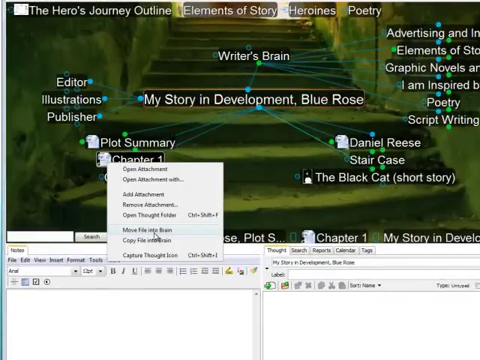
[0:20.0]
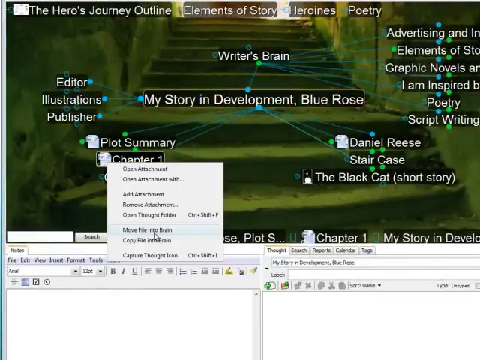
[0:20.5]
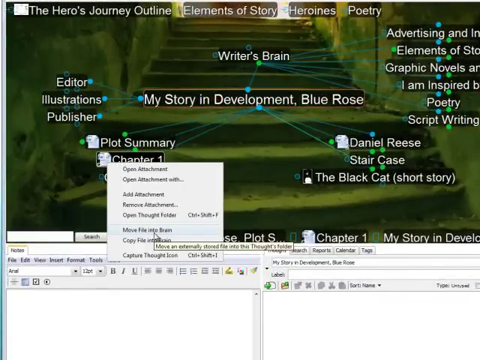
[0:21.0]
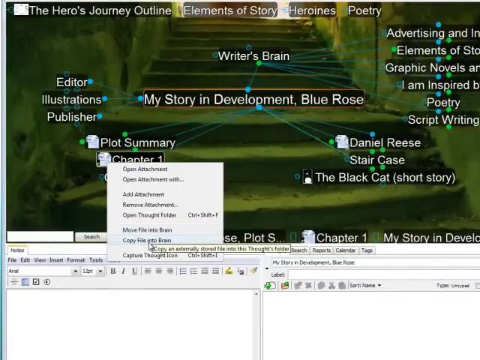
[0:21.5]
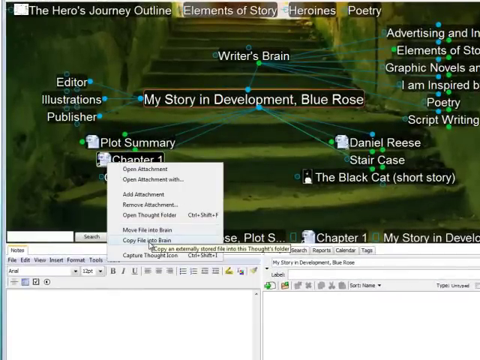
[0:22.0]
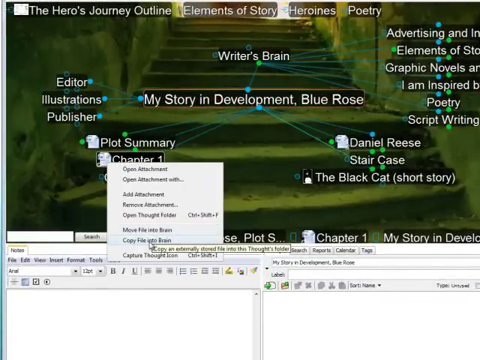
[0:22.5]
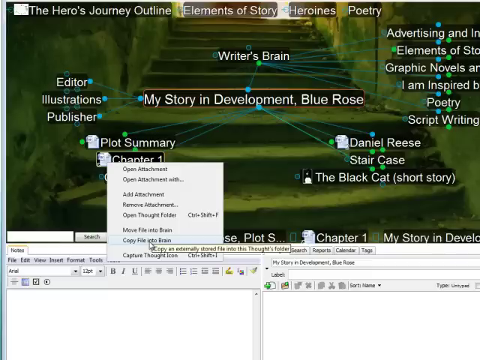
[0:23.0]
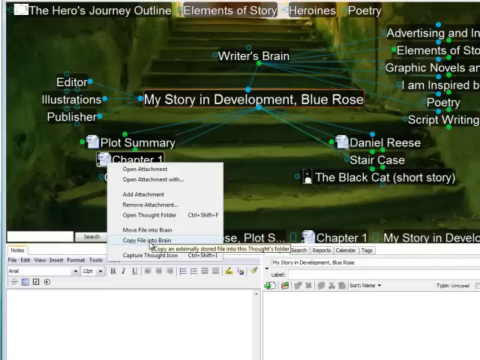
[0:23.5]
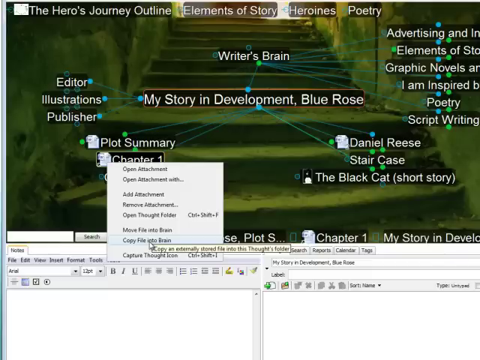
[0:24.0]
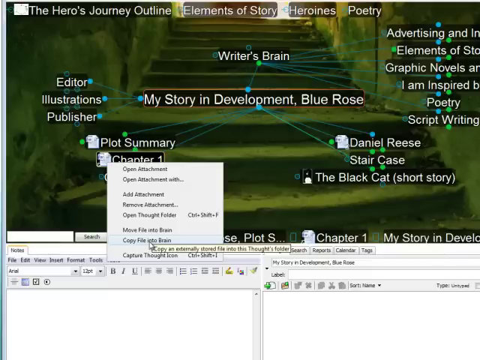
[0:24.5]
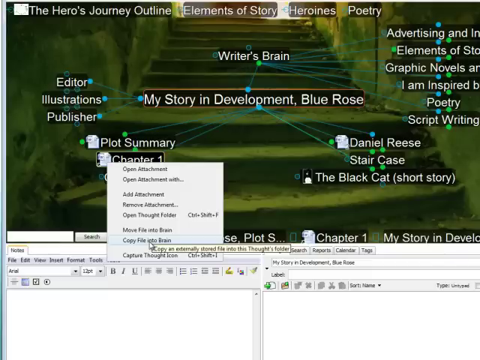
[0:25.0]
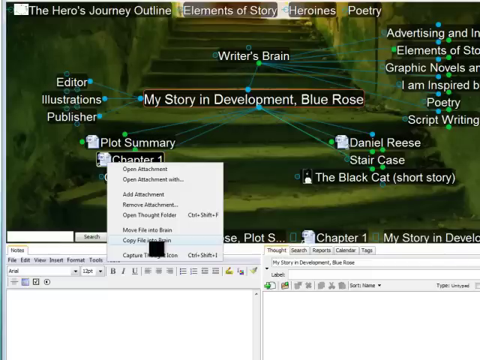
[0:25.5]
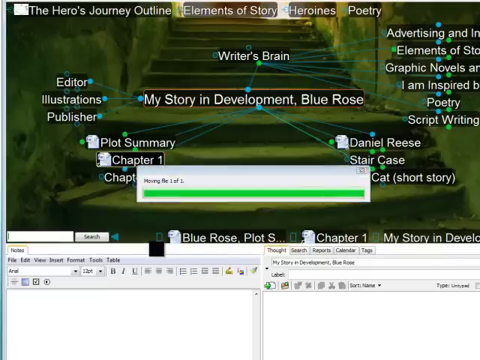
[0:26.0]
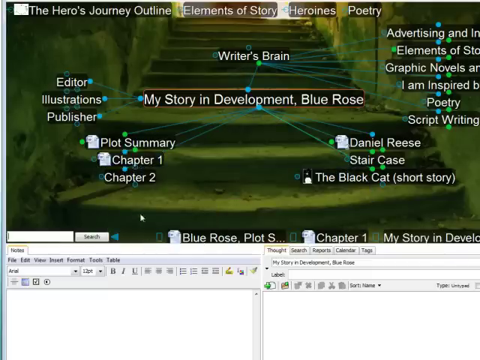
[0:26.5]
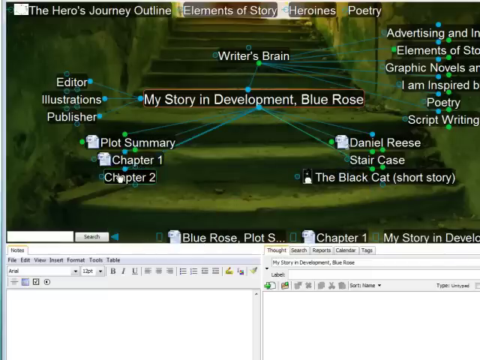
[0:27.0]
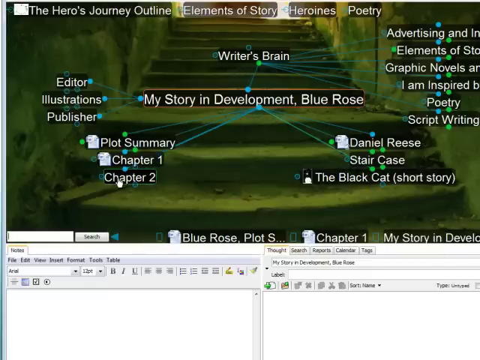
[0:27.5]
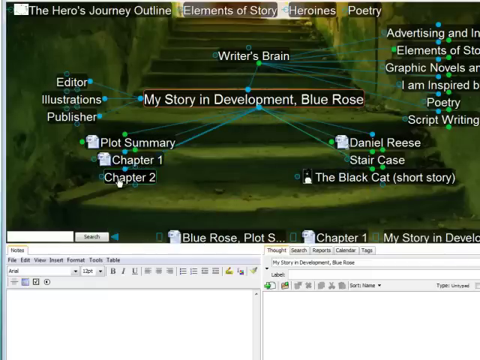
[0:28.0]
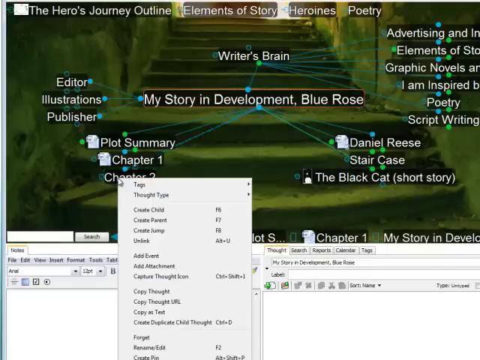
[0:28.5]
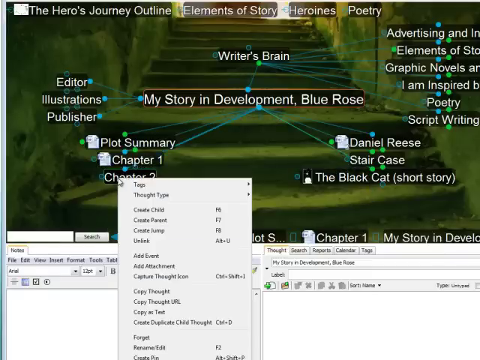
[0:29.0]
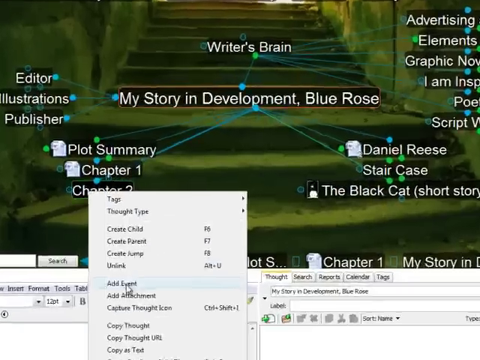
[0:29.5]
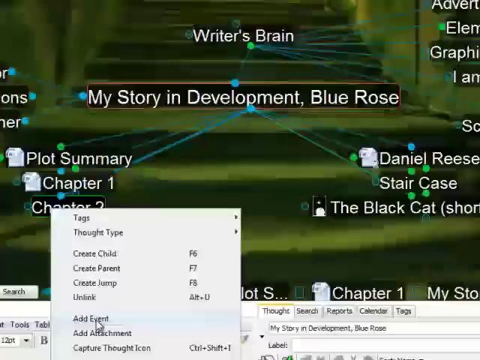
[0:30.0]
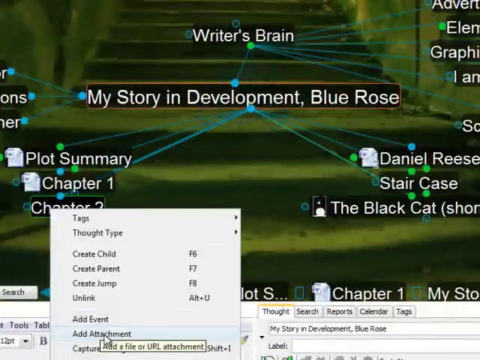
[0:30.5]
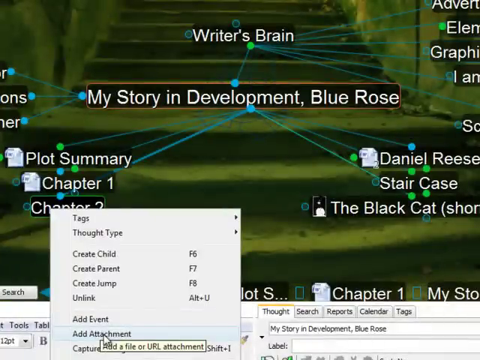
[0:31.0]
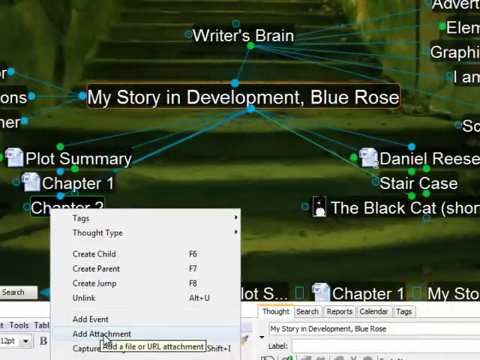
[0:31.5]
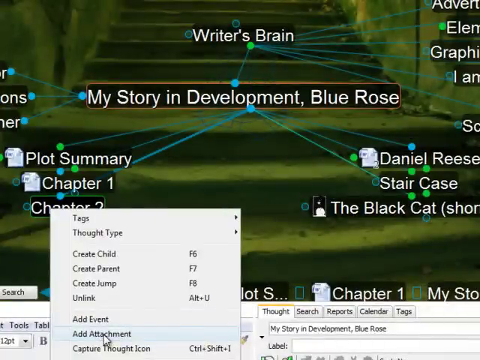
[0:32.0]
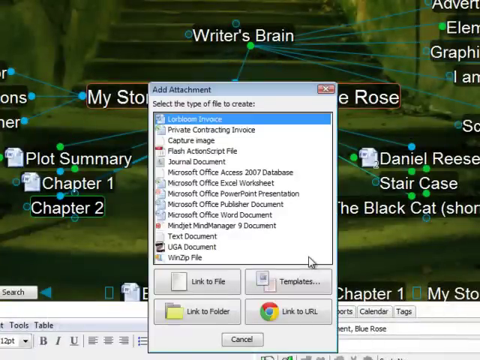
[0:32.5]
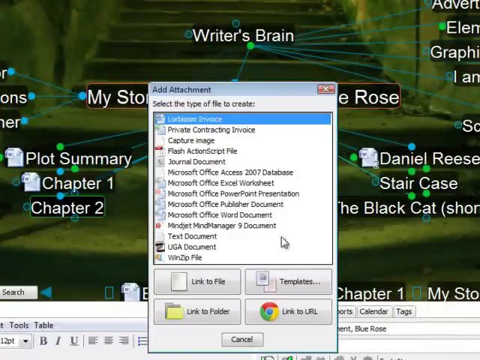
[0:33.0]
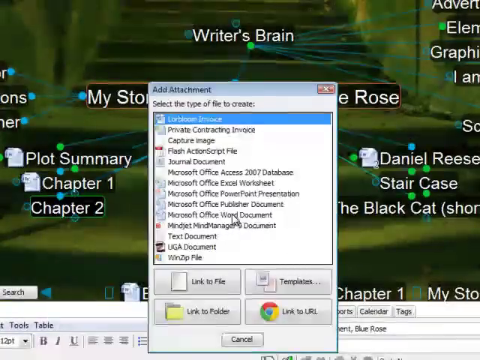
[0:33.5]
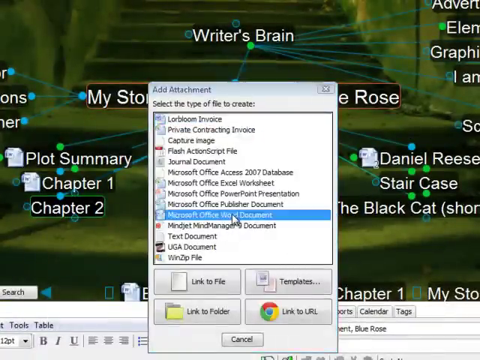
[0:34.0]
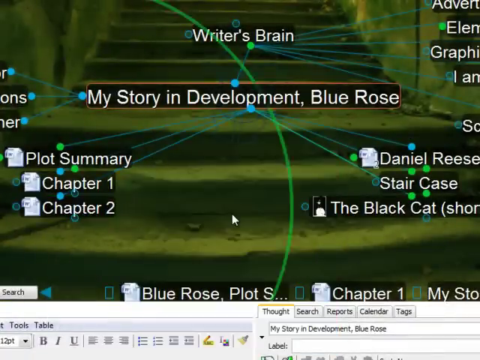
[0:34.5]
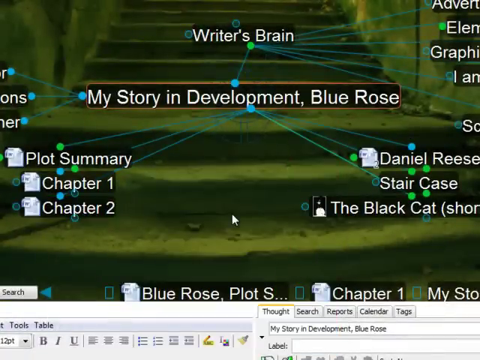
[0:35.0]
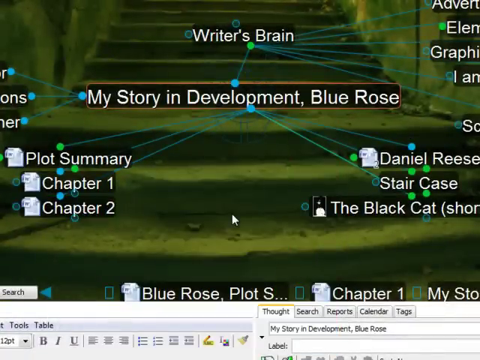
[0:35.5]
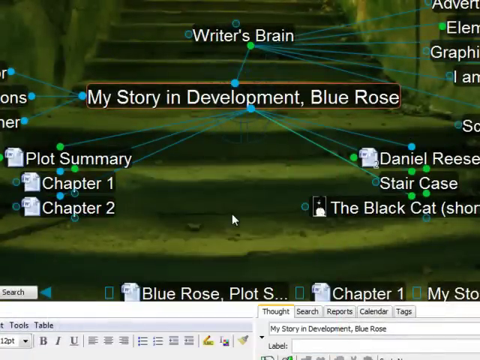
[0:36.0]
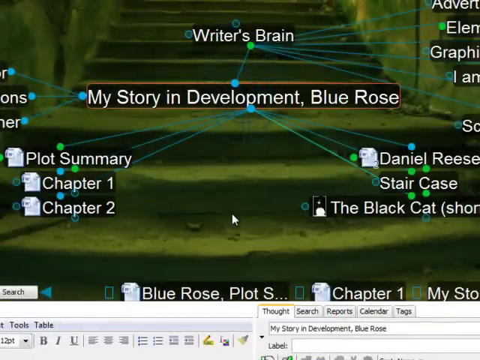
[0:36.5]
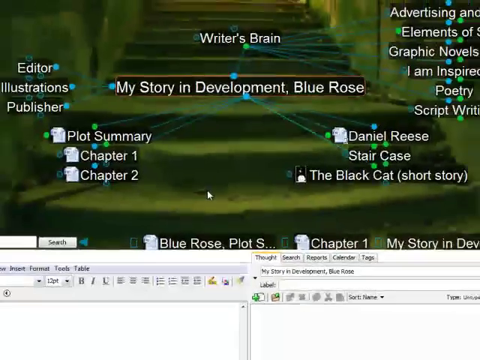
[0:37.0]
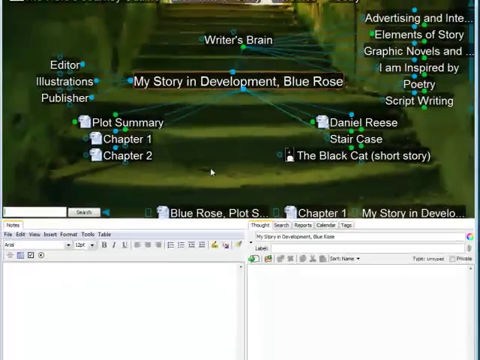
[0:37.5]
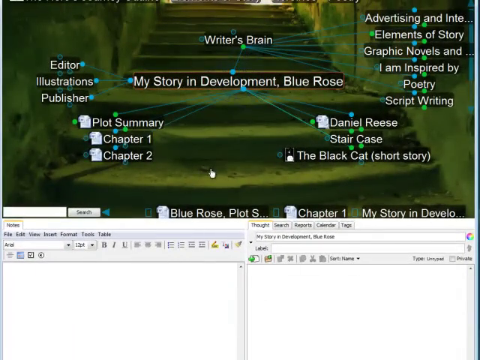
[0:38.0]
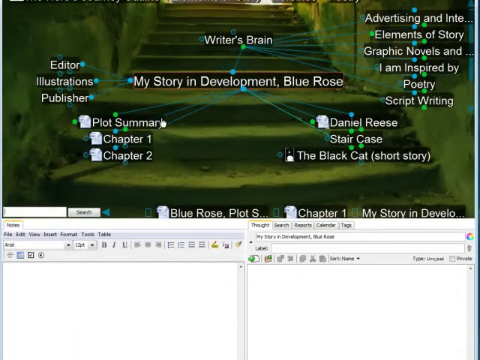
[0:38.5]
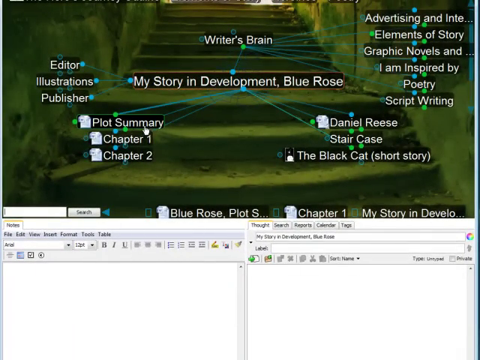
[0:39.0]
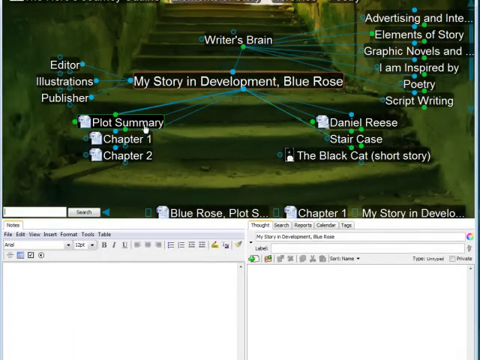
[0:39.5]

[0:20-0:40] Another chapter, chapter one, is added to the other chapters and explanations on the screen. Items pasted around the screen are files; when one is tapped, information and options appear for what can be done with that file. The overall setting stays mostly the same, changing only when a tab is clicked and something comes out. The tab "plot summary" is tapped, and information with various options pops up.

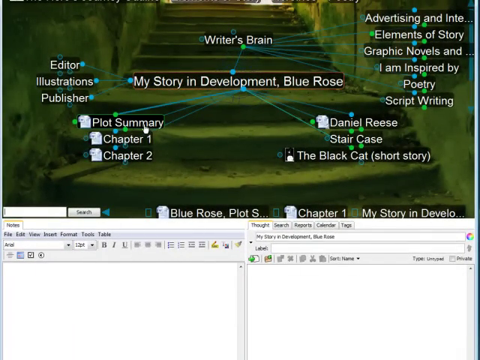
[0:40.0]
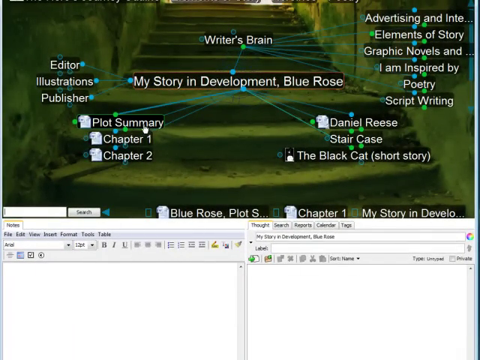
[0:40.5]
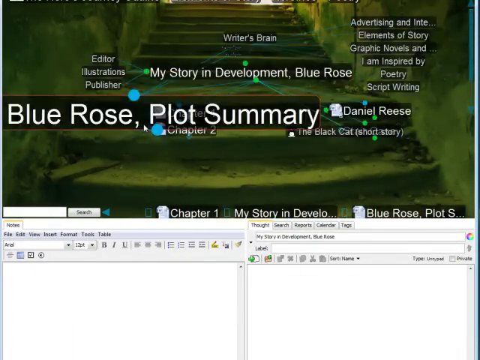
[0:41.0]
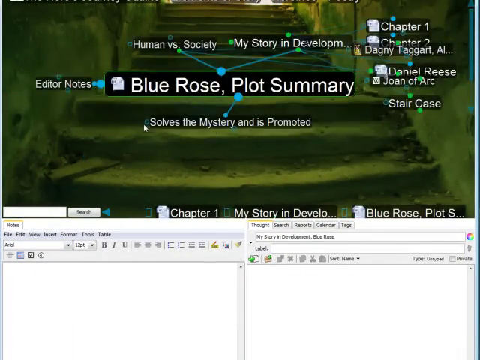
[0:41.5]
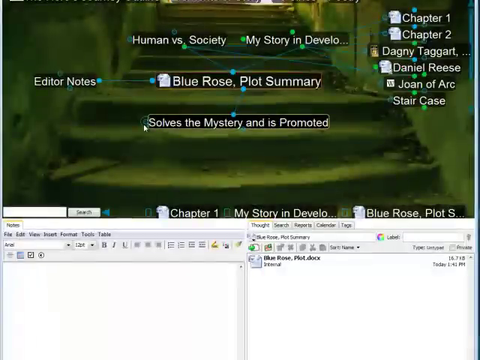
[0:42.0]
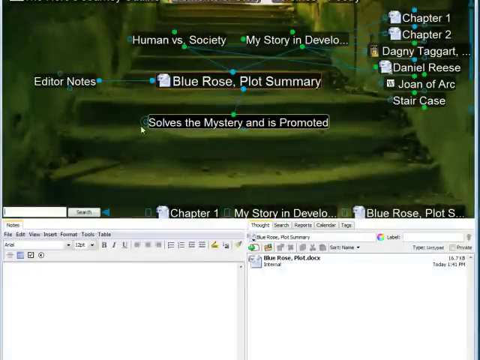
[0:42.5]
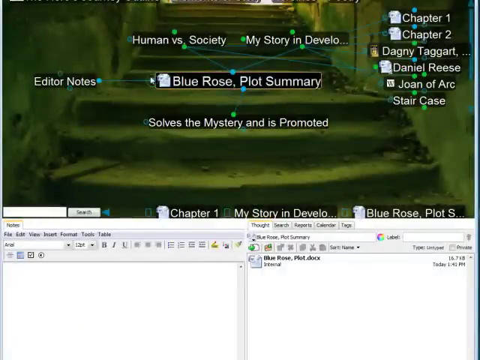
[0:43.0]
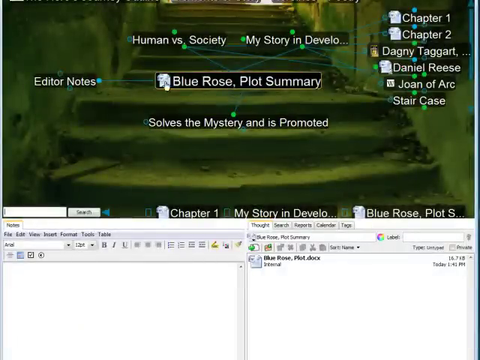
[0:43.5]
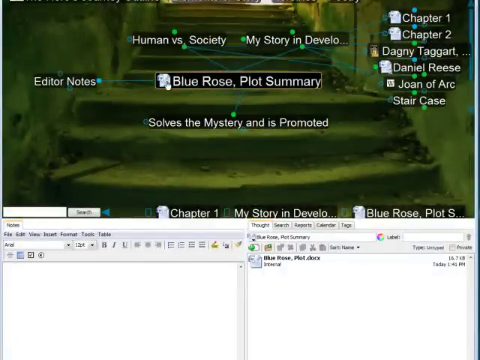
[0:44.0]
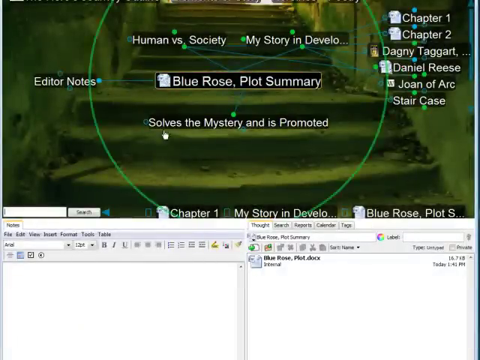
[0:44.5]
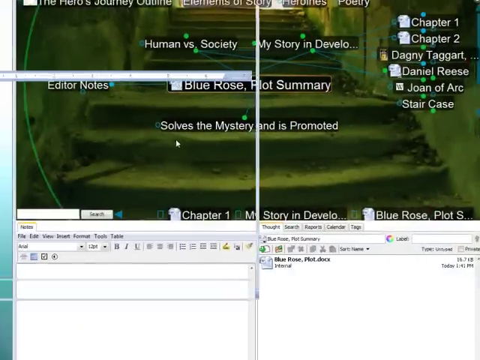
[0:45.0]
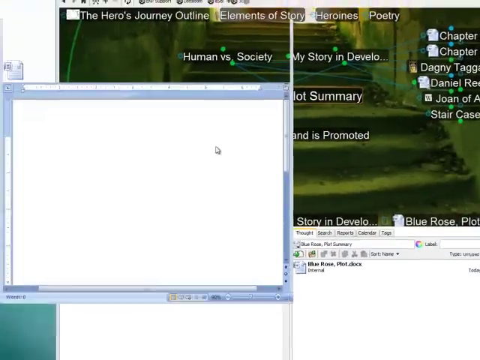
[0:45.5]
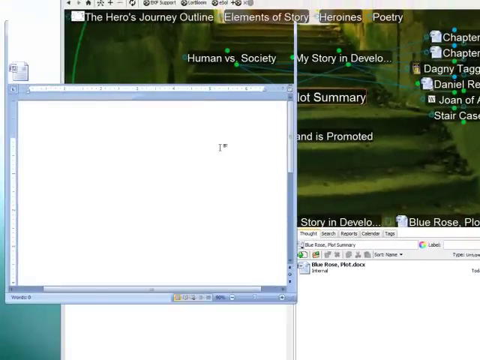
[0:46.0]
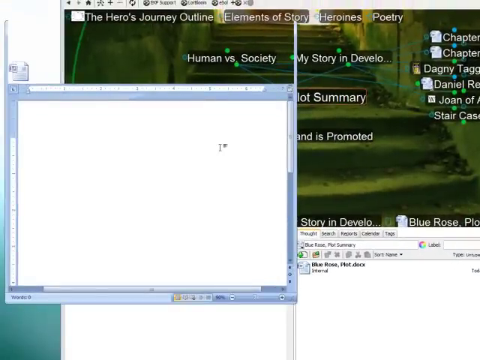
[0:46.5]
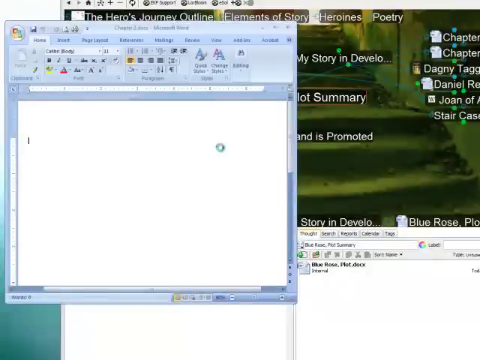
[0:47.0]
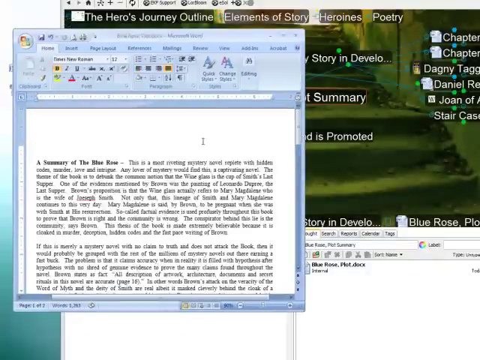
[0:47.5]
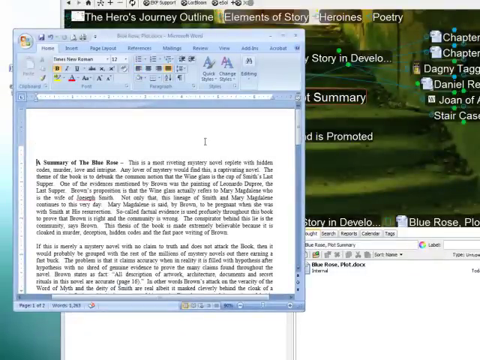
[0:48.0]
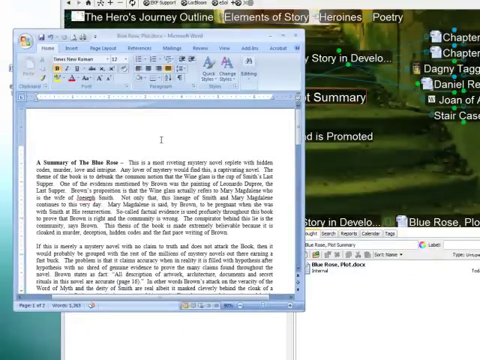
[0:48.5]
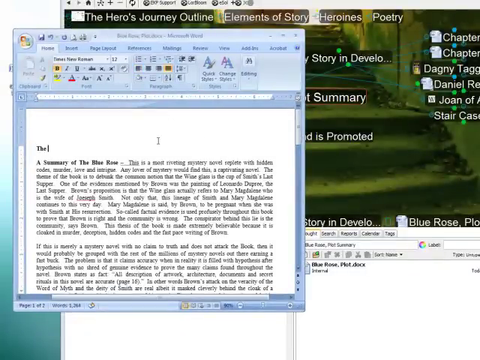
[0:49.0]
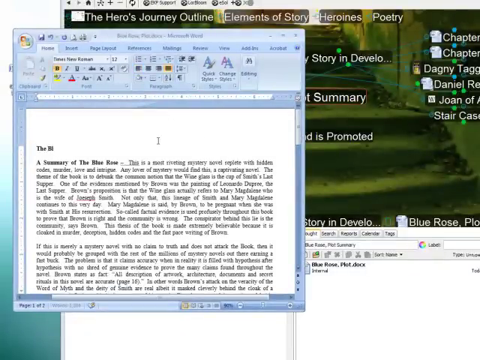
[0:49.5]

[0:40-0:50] The smaller parts seen earlier have changed and the setting is different. The "plot summary" tab is open, showing another tab with what may be two paragraphs. The Blue Rose summary comes up with its heading highlighted and bolded. Editing options appear and information is typed in. Above, there are many text styles in different colors and formats available for editing the paragraph below.